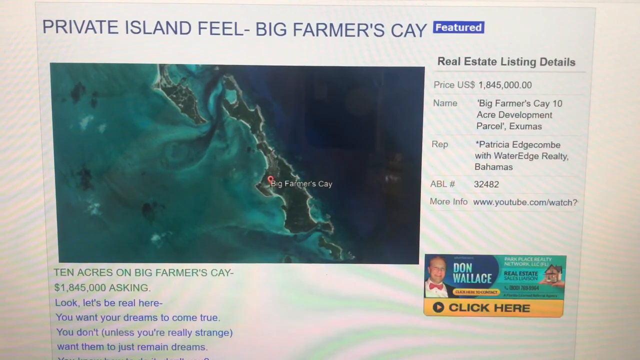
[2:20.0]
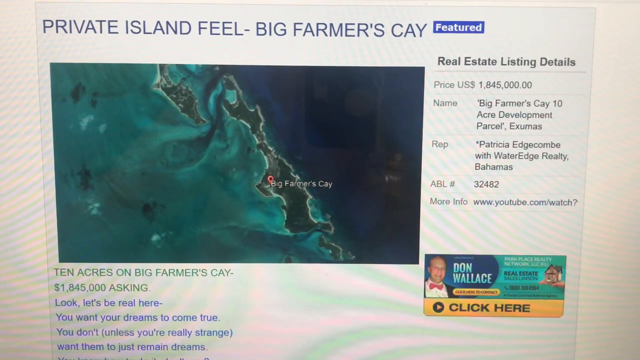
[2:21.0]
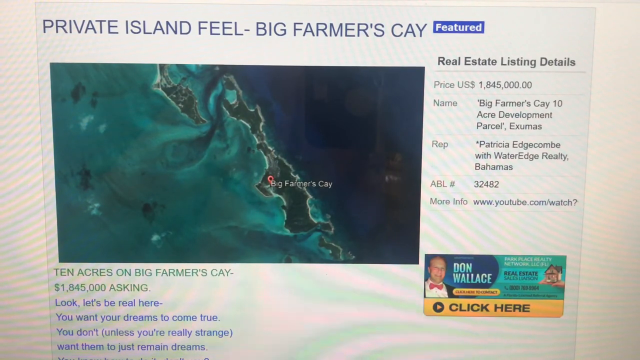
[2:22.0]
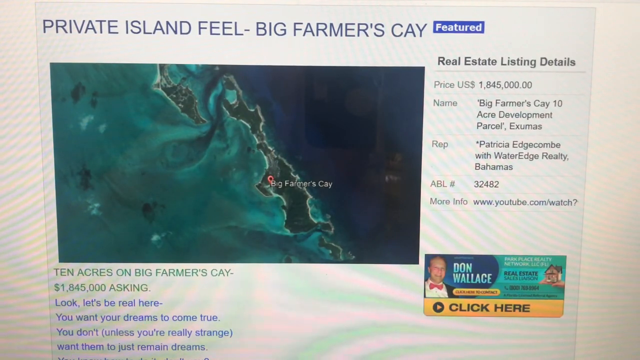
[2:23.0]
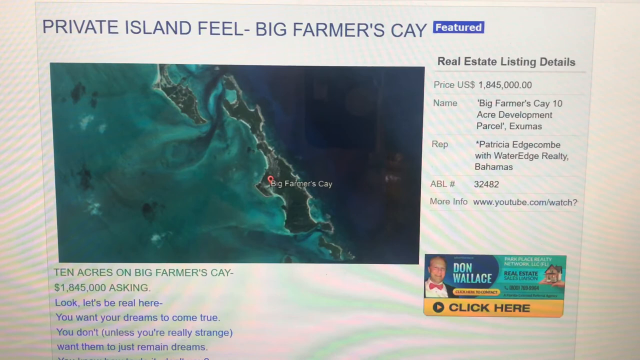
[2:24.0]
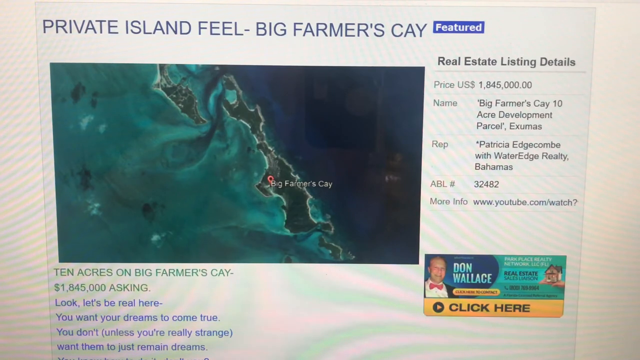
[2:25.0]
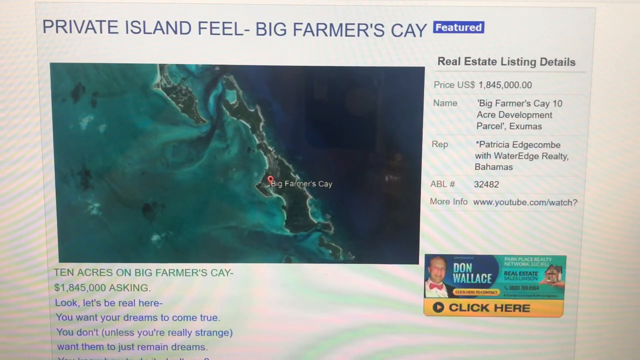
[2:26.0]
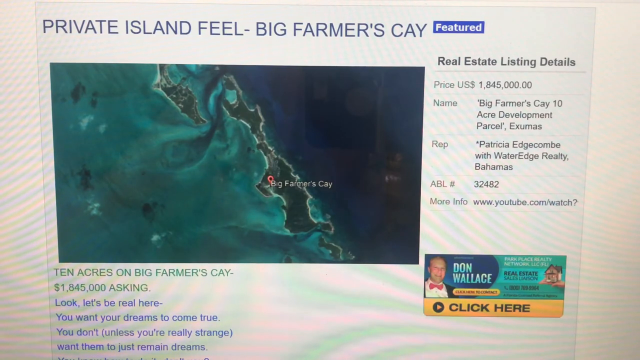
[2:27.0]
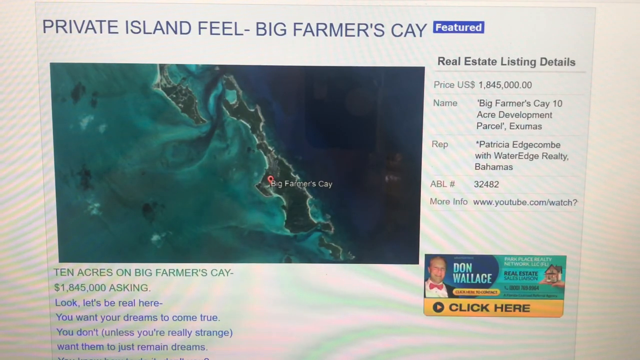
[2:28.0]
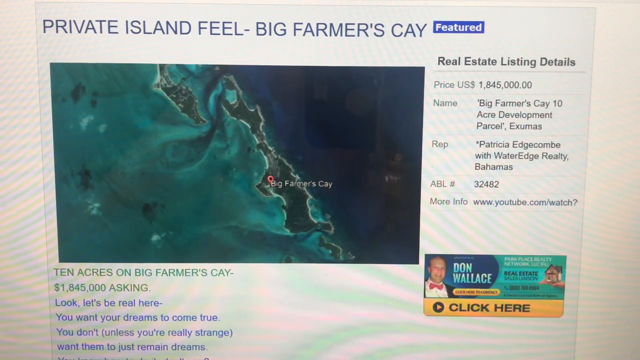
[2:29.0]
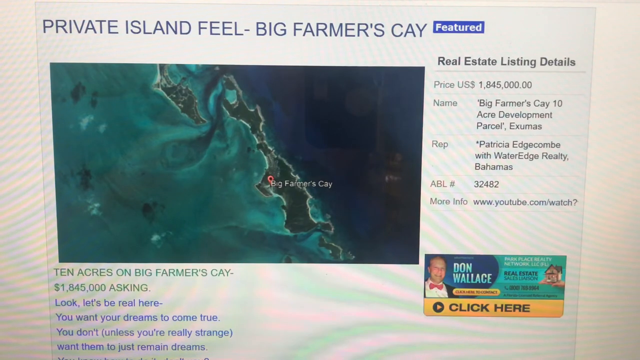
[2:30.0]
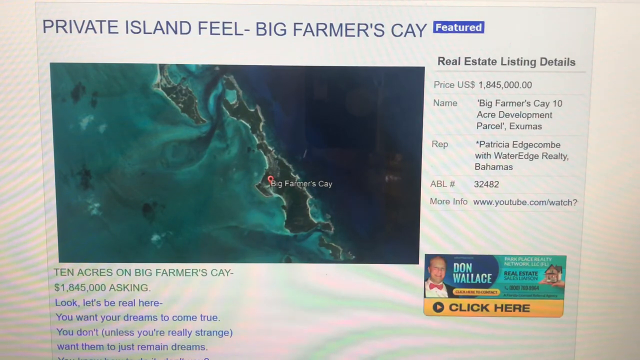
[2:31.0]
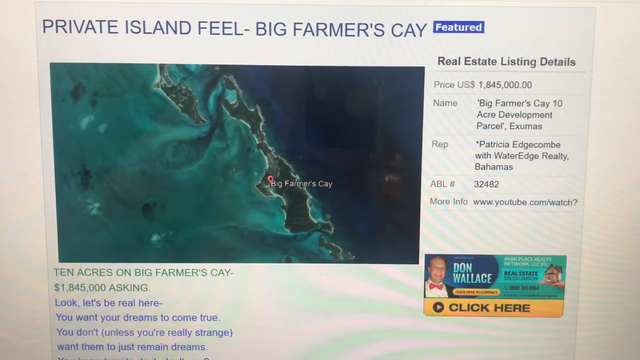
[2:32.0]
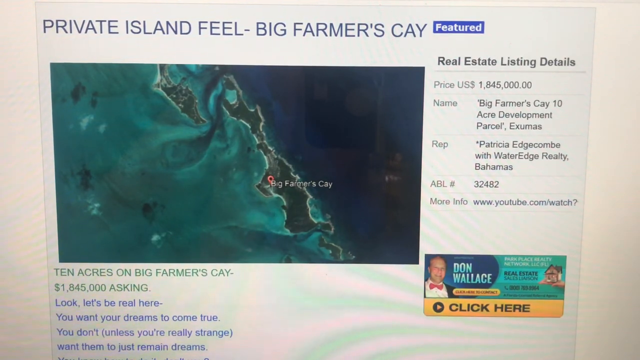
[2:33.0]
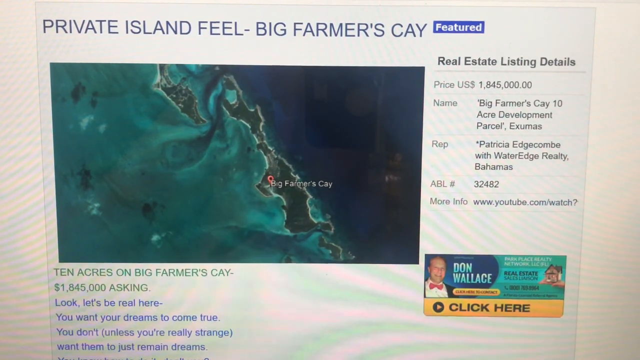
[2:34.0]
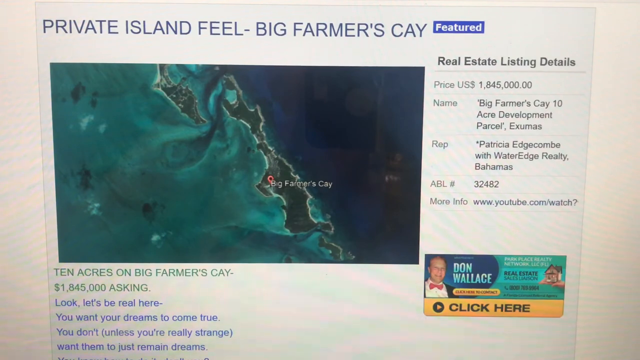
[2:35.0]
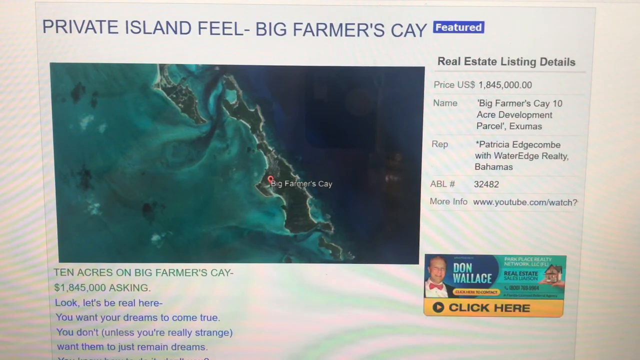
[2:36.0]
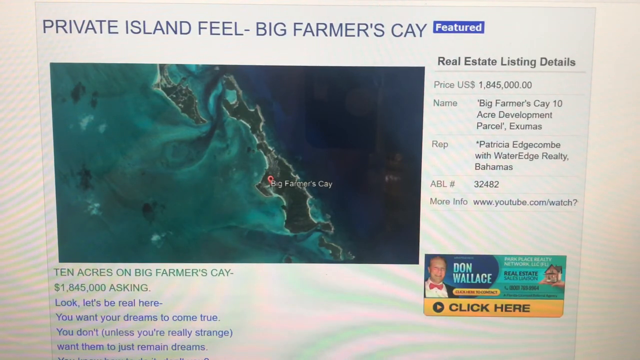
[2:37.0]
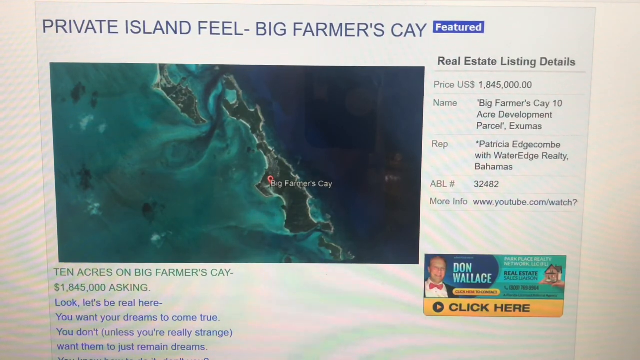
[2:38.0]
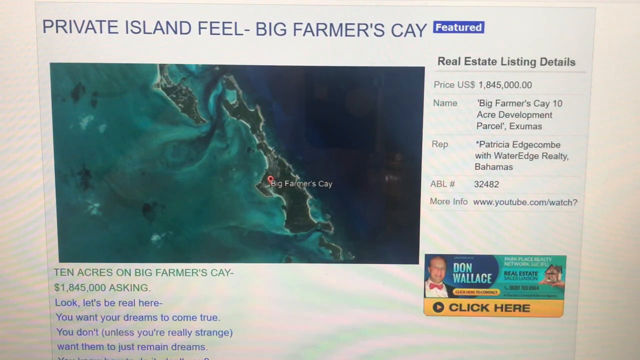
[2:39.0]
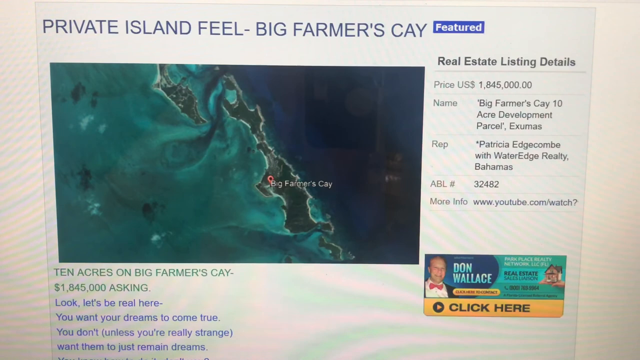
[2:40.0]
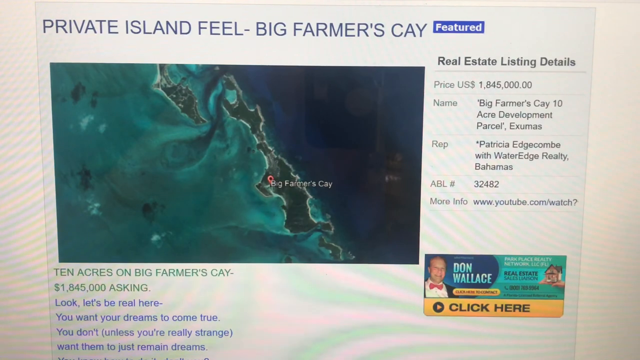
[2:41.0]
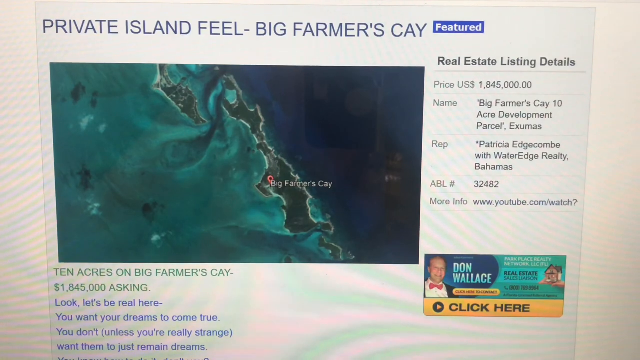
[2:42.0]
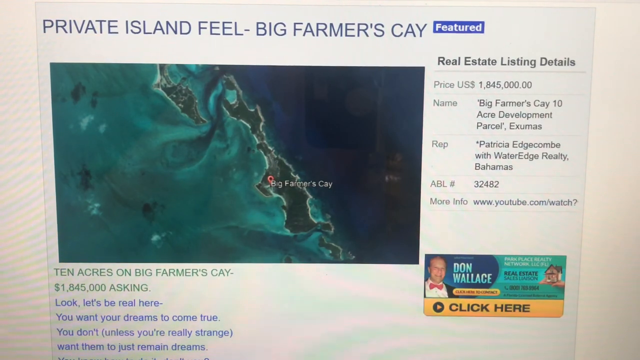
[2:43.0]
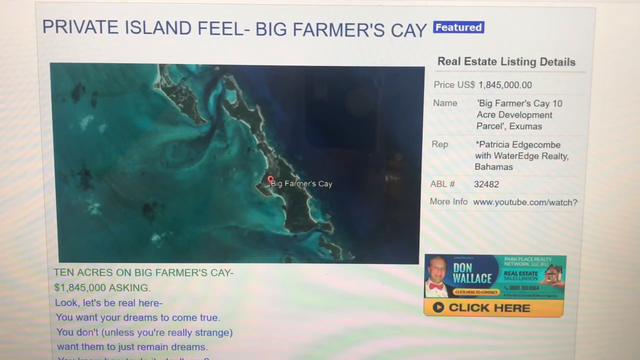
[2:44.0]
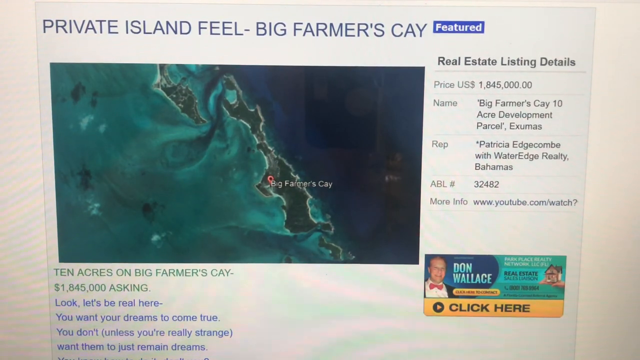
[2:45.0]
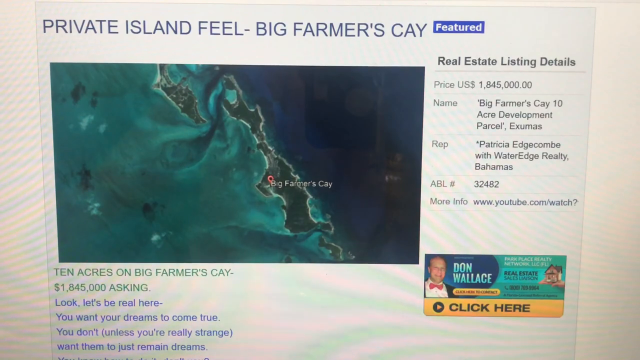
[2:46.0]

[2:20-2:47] Nothing on the site changes; the reflection of the person behind the camera is visible. The pen flips up and down and left and right, with rapid movement from left to right, possibly as they type or write something. Their hand stays fairly steady, and there is movement on the right side of the screen from their hand, apparently moving the right hand more than the left. The picture shows where the acres are, the name, the island from above, the neighbouring island, and a smaller island in the lower right corner that seems isolated from the bigger islands. The image stays still, and the advertisement at the bottom right does not move.